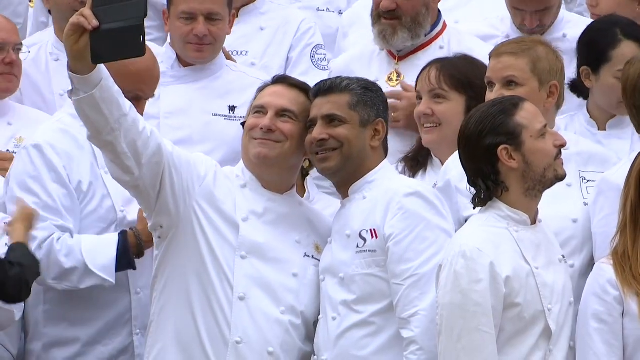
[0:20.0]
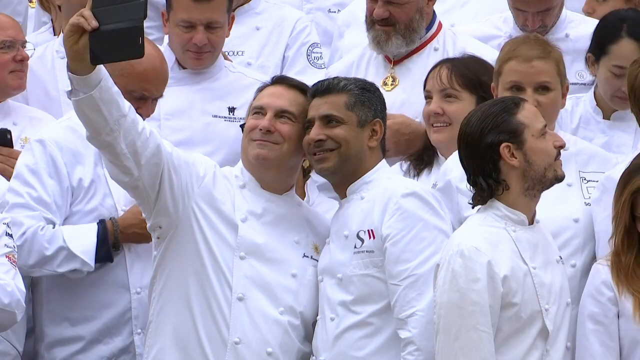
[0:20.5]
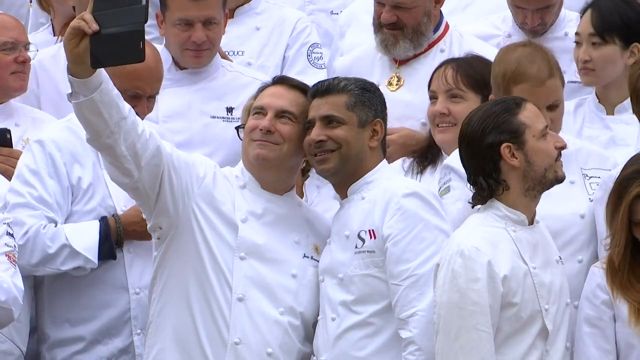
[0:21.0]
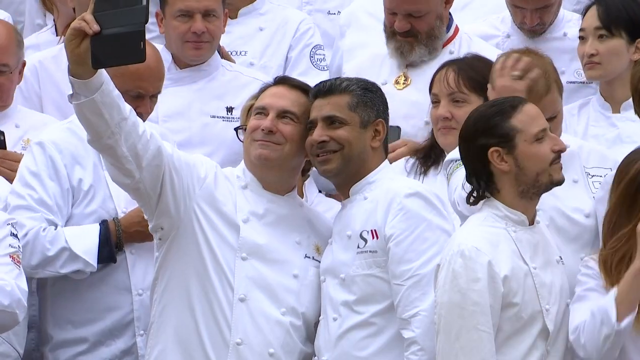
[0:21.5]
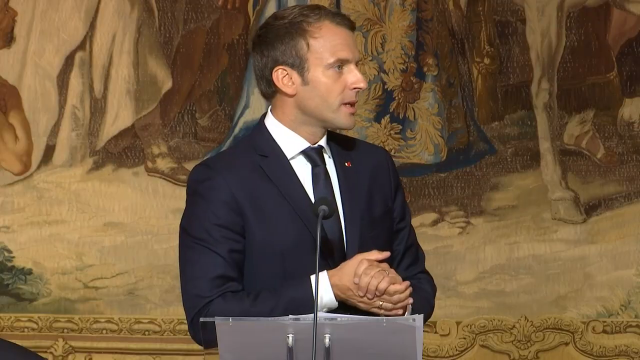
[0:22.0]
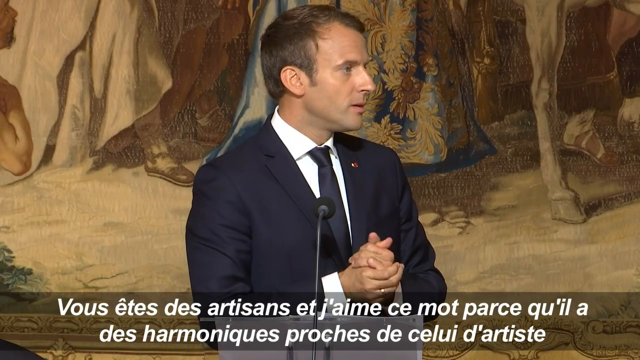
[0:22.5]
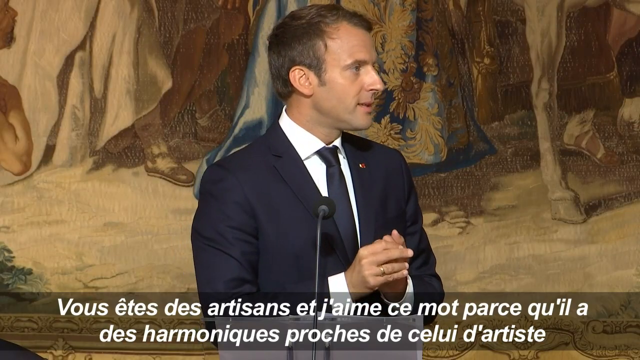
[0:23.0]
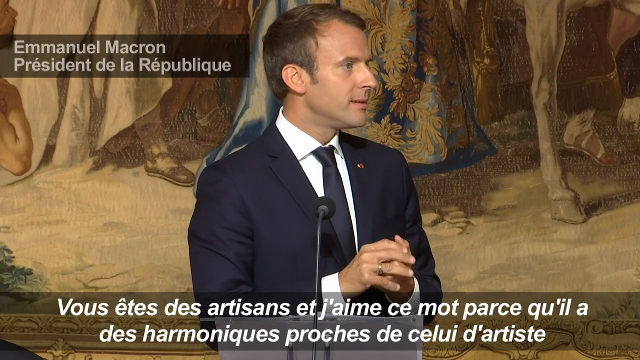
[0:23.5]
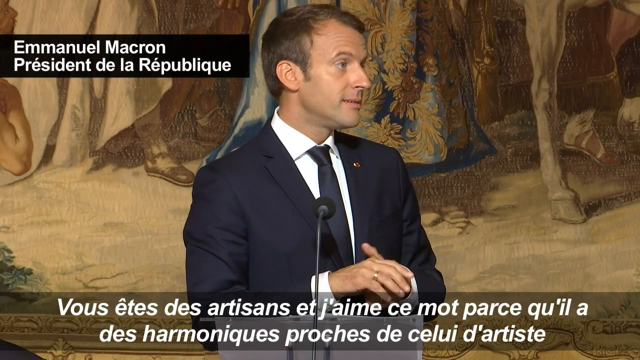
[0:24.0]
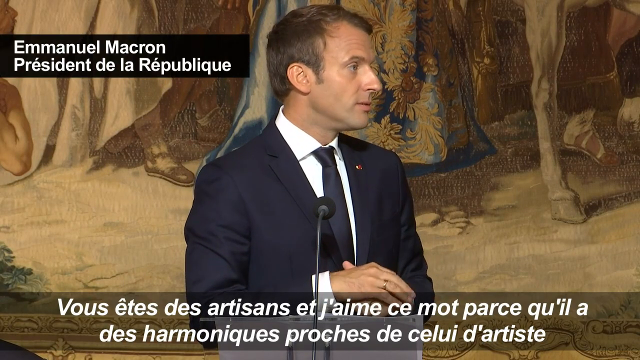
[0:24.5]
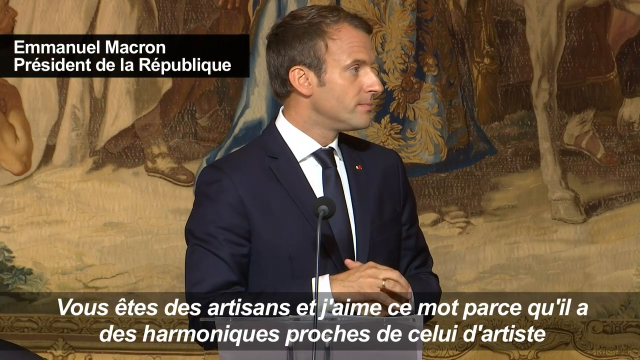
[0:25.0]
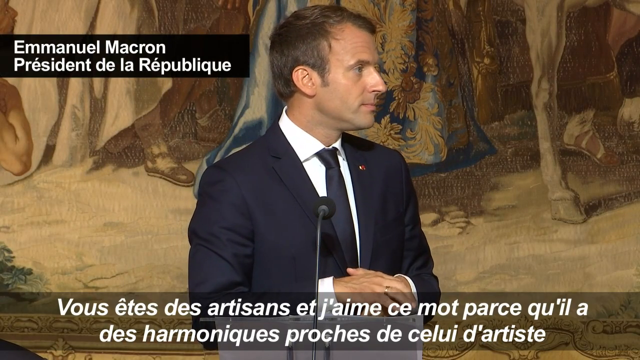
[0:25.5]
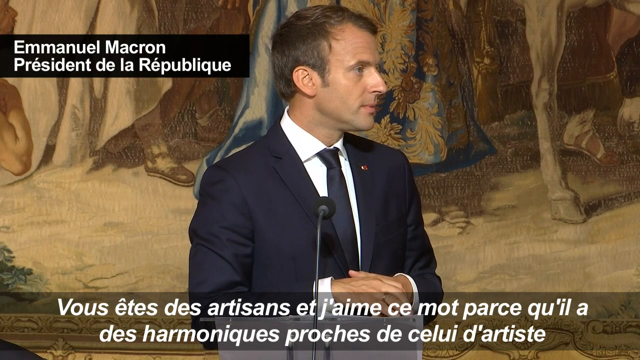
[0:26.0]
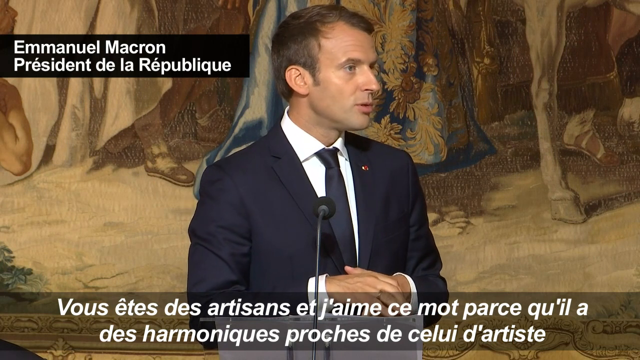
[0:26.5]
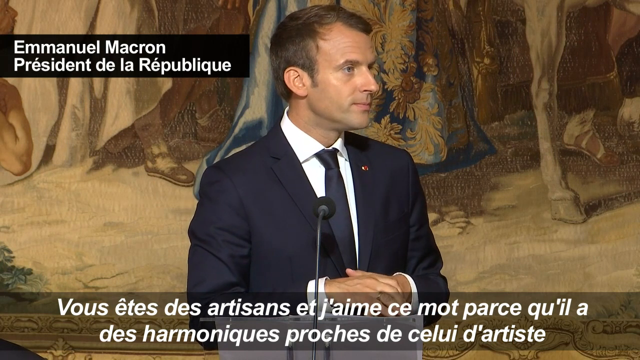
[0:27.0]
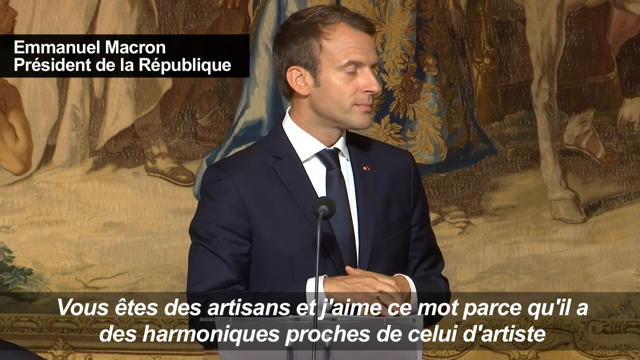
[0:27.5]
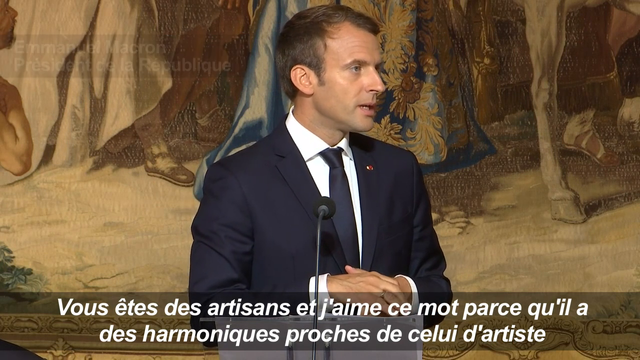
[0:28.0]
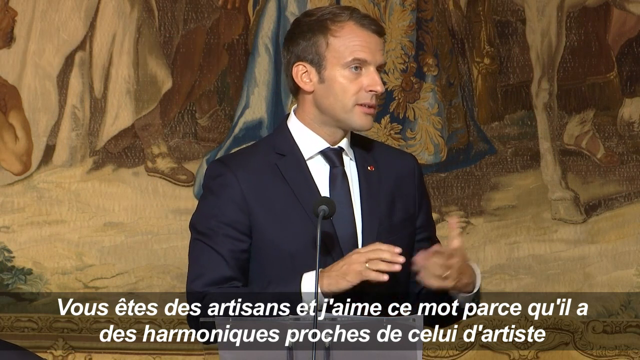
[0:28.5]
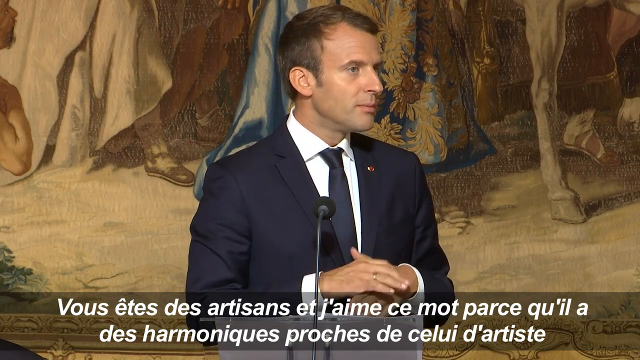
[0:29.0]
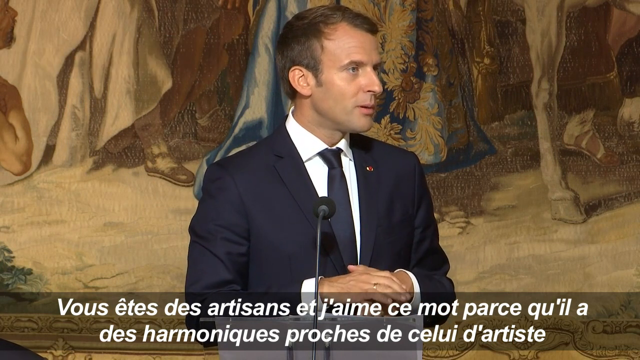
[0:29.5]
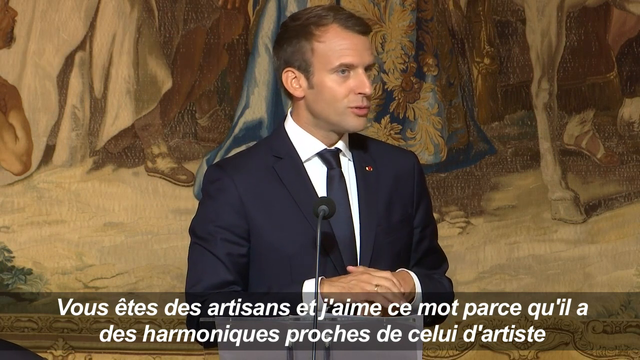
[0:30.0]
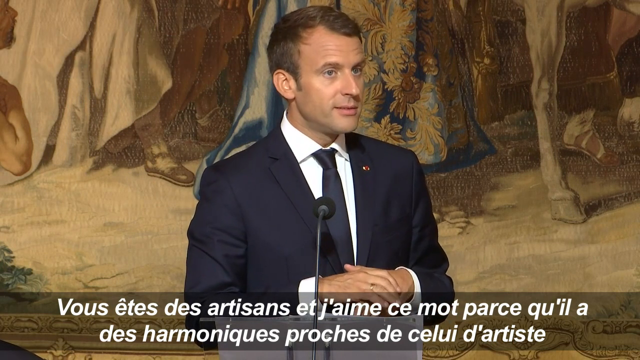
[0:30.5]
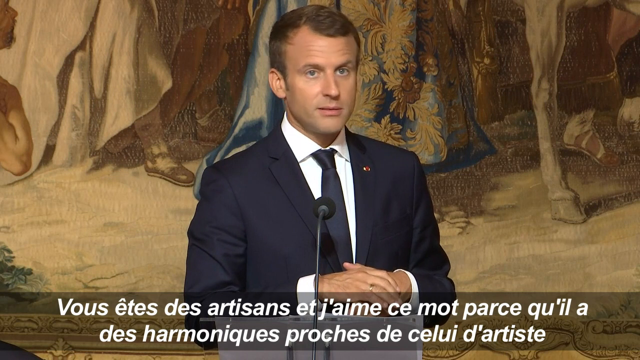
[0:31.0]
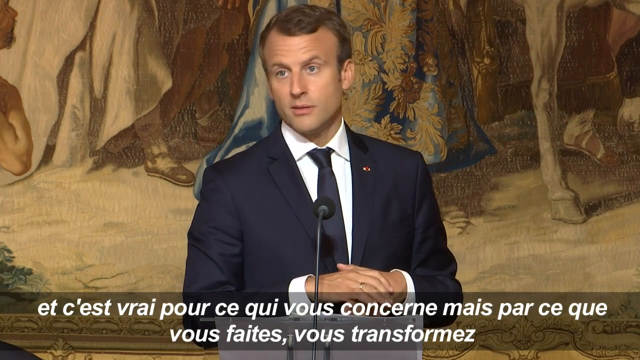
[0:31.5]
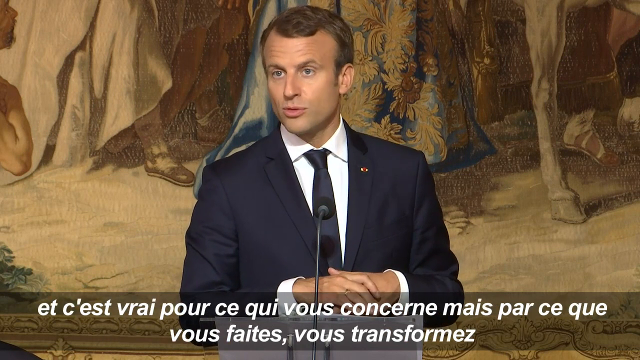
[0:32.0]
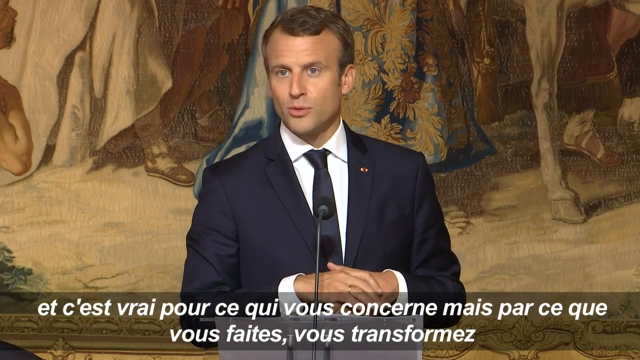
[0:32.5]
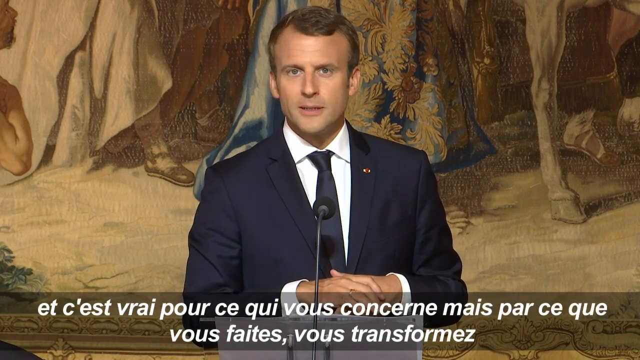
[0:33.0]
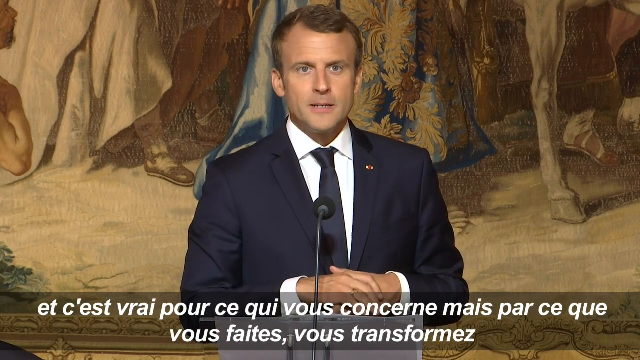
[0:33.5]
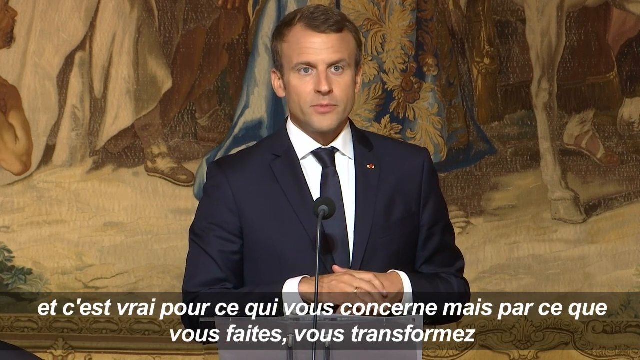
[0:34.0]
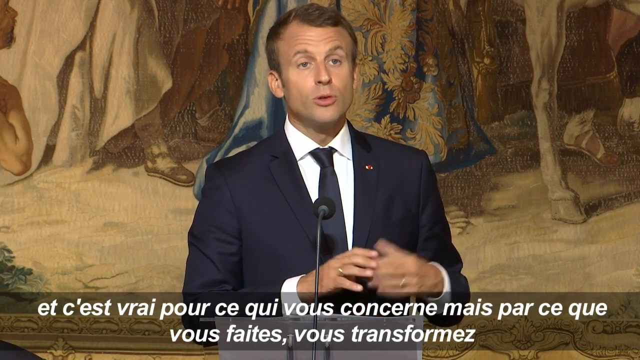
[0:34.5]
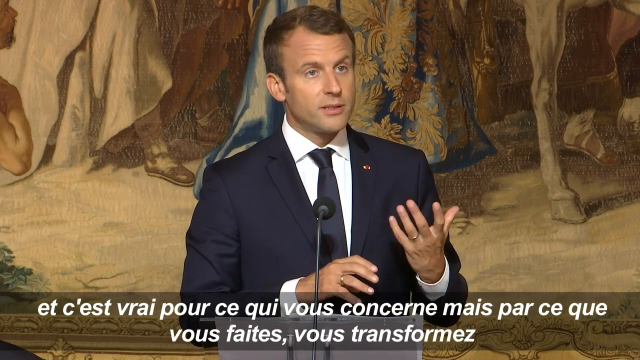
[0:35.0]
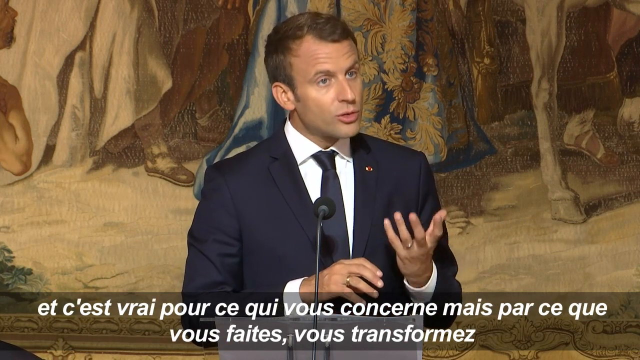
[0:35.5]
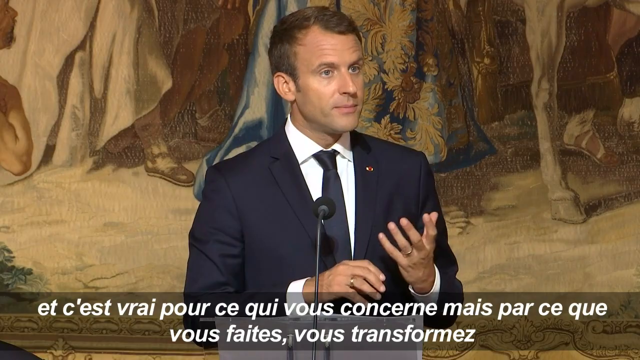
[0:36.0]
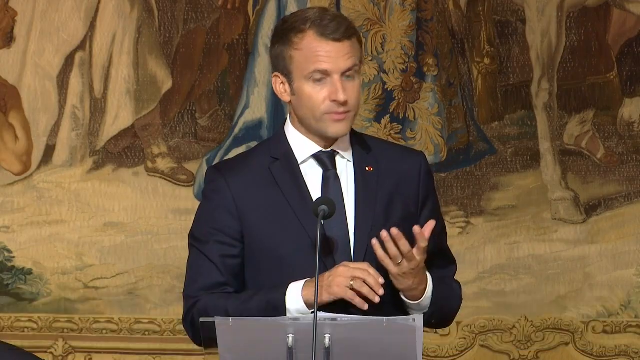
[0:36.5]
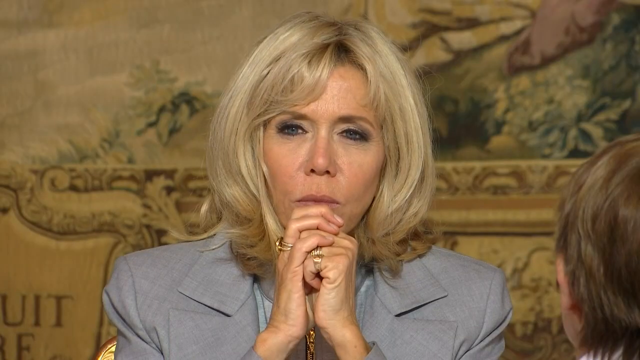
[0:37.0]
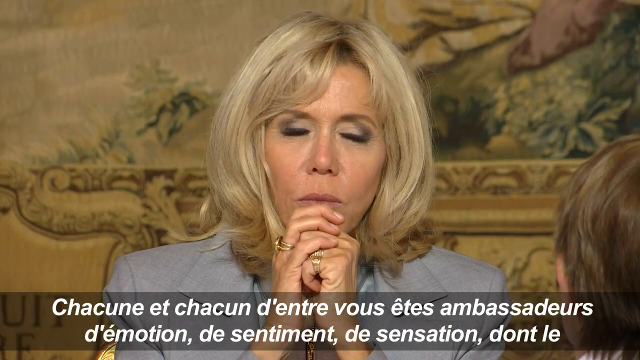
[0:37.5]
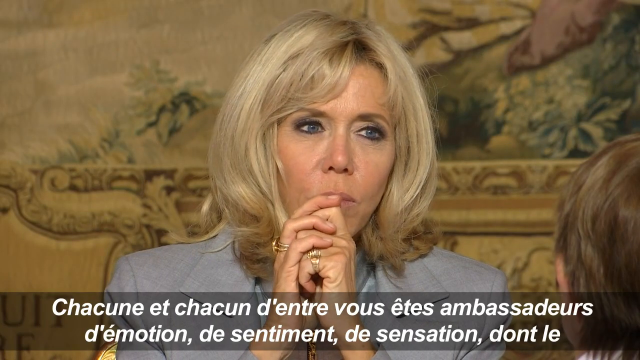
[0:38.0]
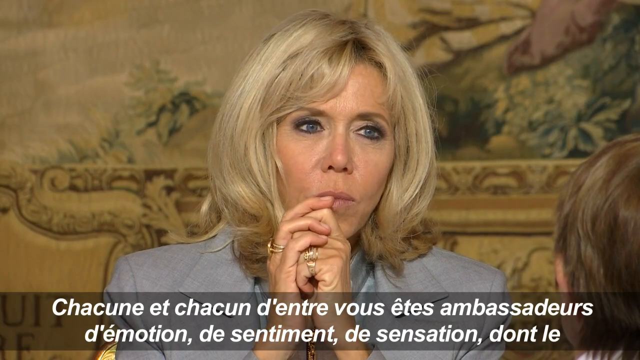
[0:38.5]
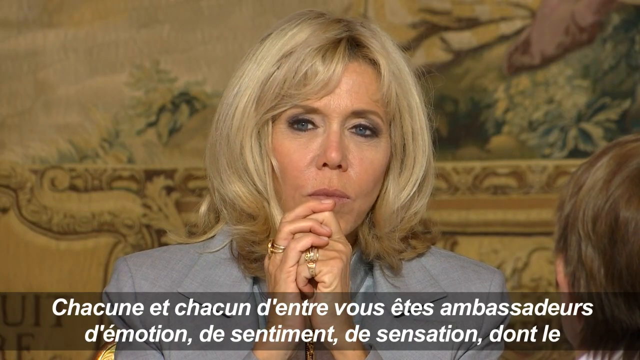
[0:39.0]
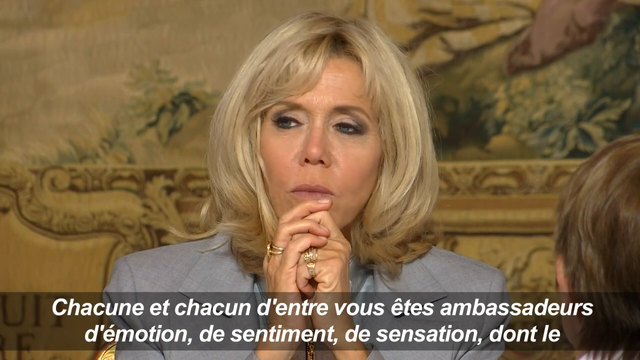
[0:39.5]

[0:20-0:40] The chefs are gathered together, standing after posing for a photo. Some check their phones, some use their phones to take pictures, and some take selfies. They all wear white jackets, and some wear gold medals with red, white and blue, as though they won something. The video then switches to a man standing at a podium in front of a microphone, wearing a dark suit, a white shirt and a dark tie, with short hair and a clean-shaven face. He is Emmanuel Macron, President of the Republic, and the closed captioning is in French. A woman with blonde hair is listening.